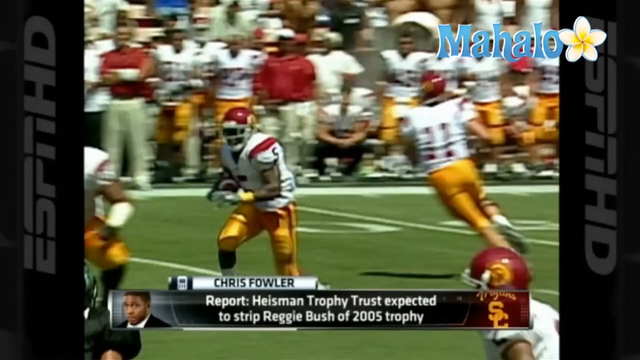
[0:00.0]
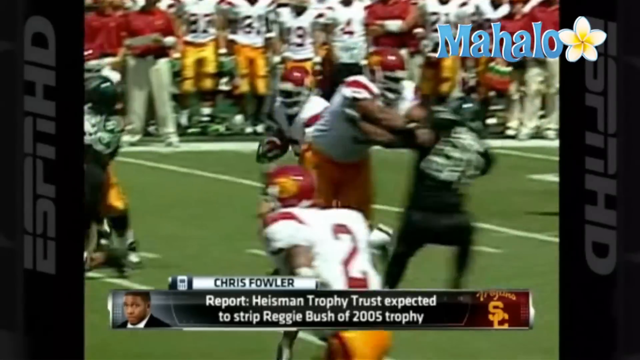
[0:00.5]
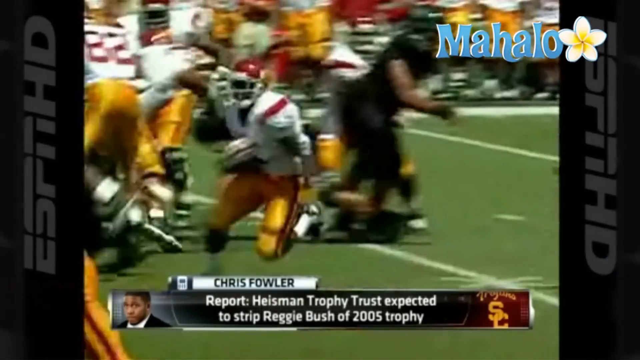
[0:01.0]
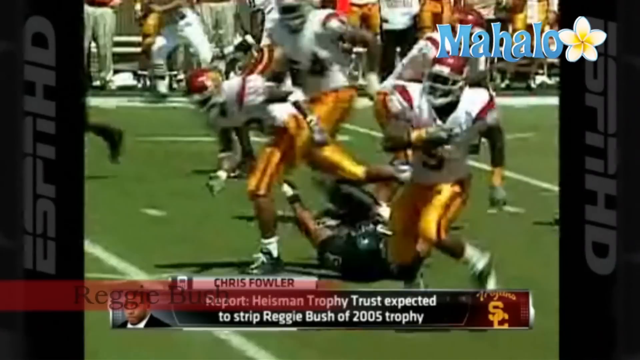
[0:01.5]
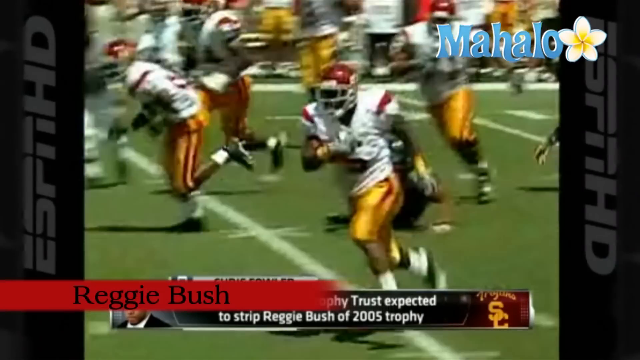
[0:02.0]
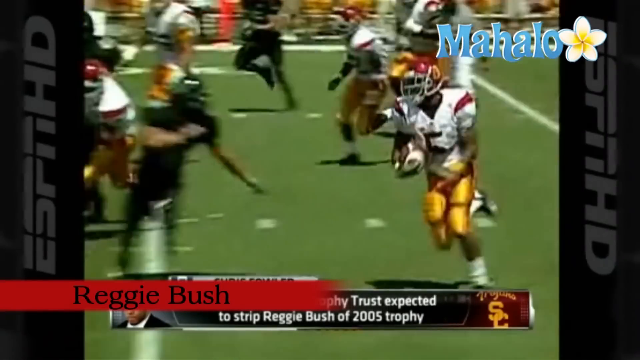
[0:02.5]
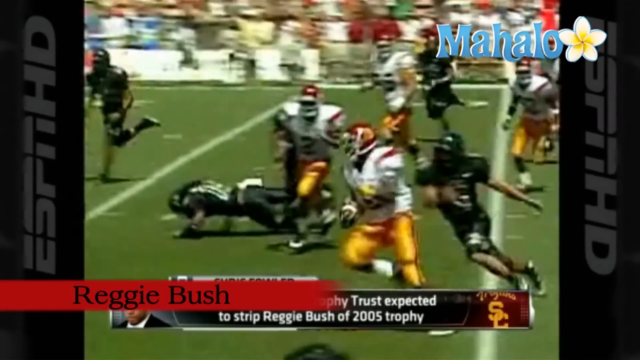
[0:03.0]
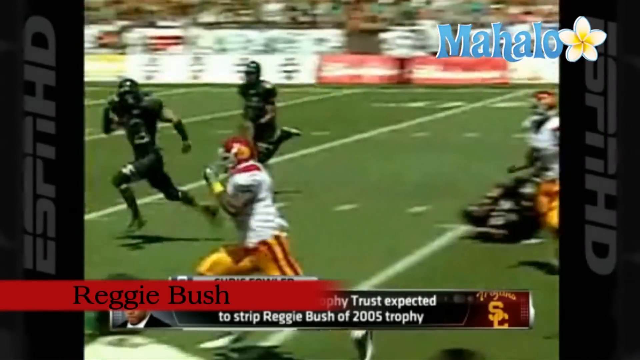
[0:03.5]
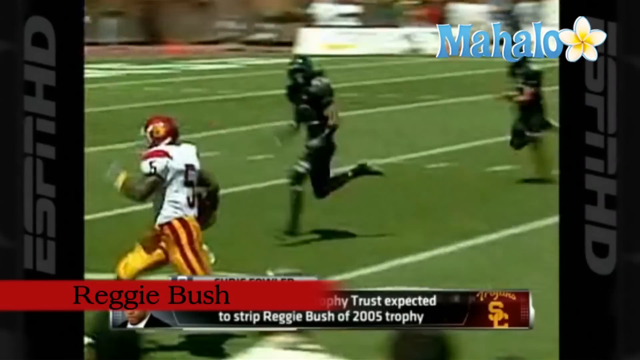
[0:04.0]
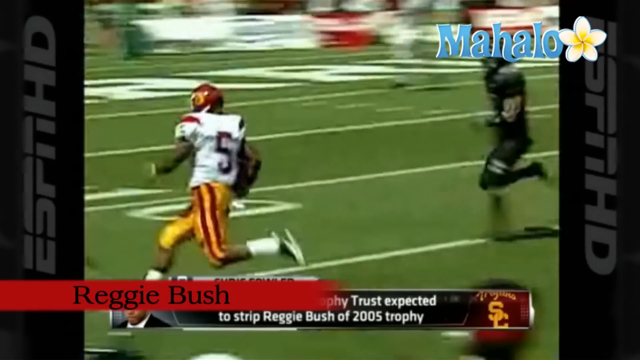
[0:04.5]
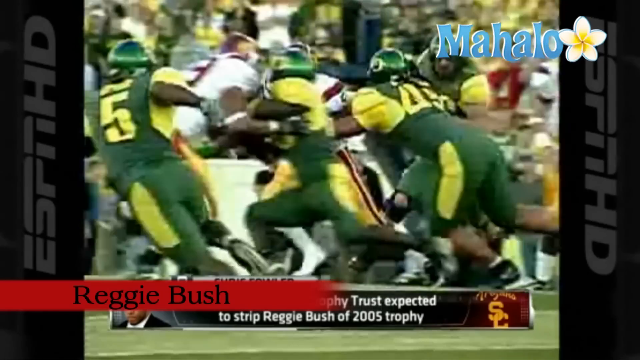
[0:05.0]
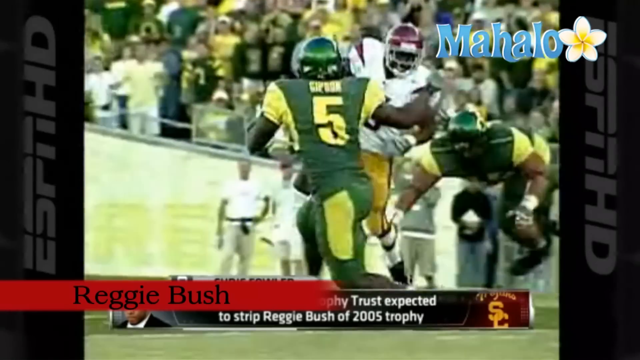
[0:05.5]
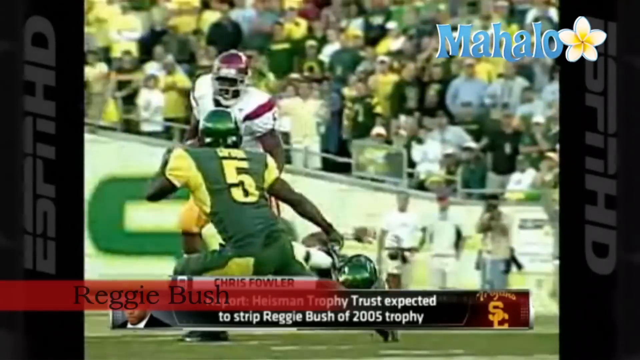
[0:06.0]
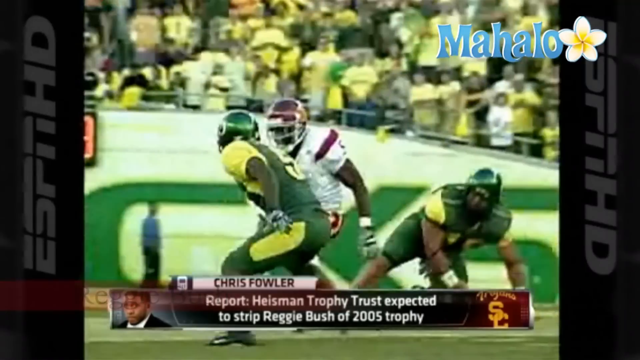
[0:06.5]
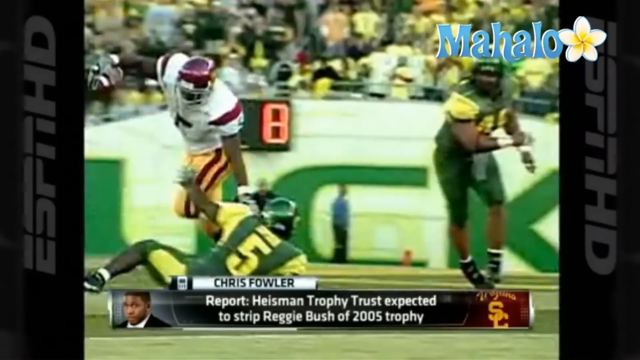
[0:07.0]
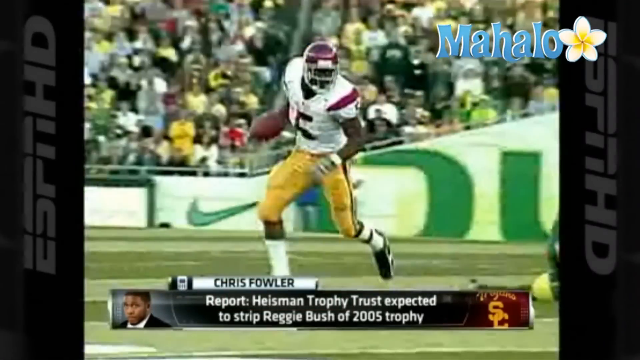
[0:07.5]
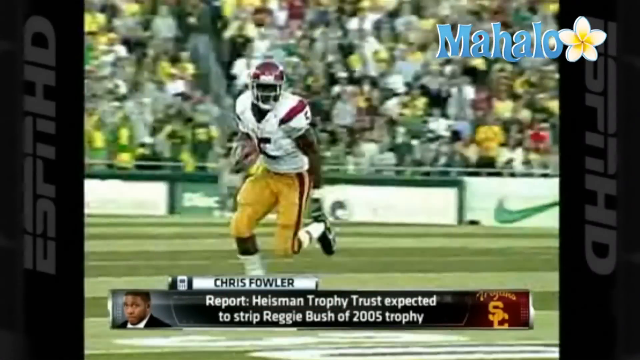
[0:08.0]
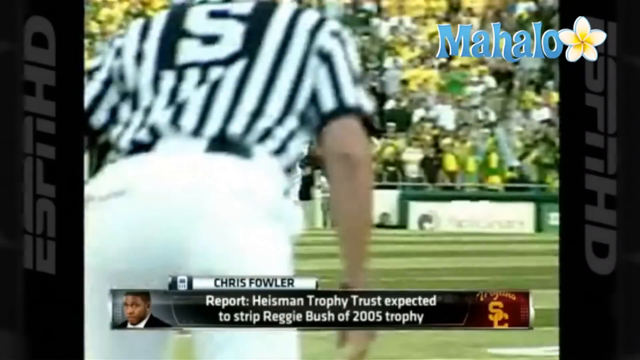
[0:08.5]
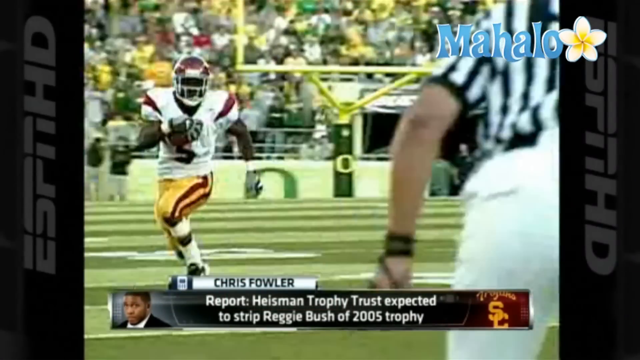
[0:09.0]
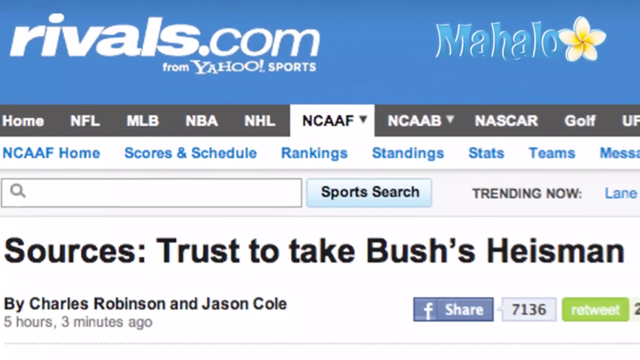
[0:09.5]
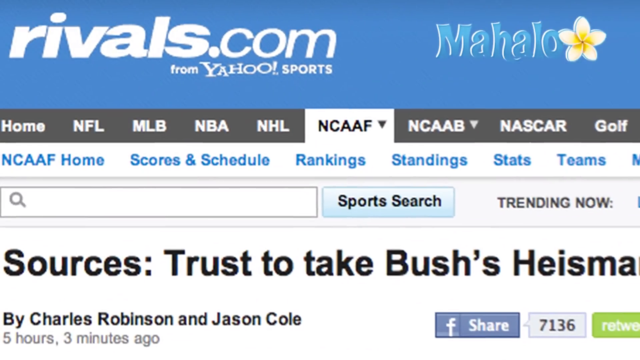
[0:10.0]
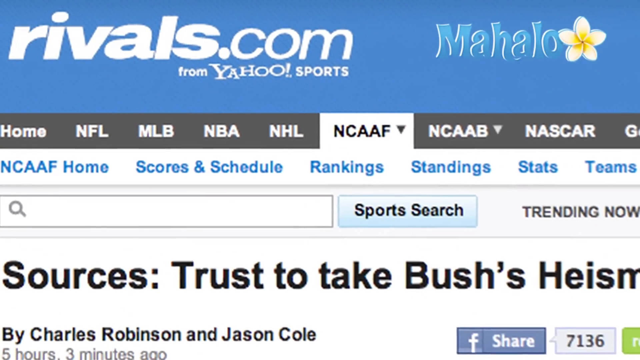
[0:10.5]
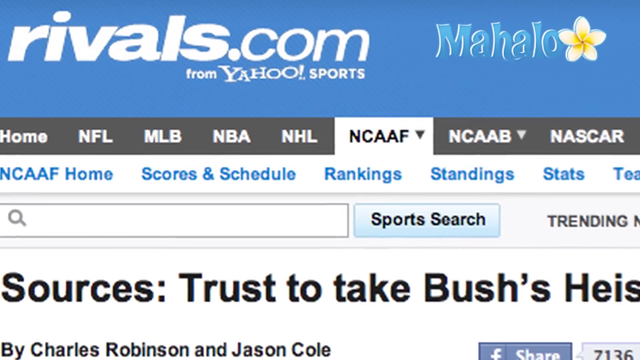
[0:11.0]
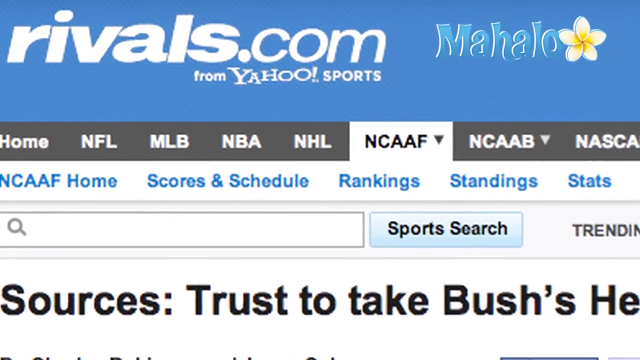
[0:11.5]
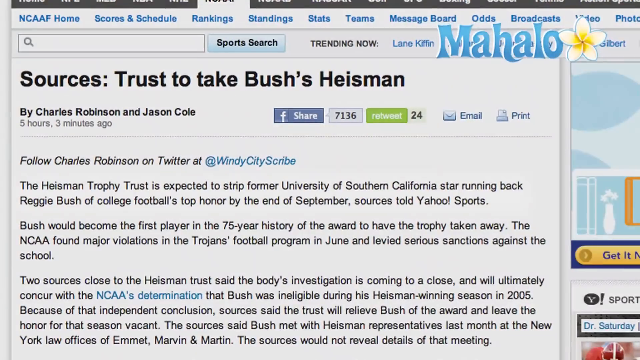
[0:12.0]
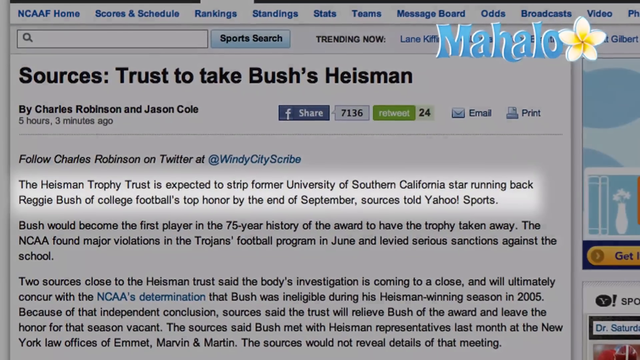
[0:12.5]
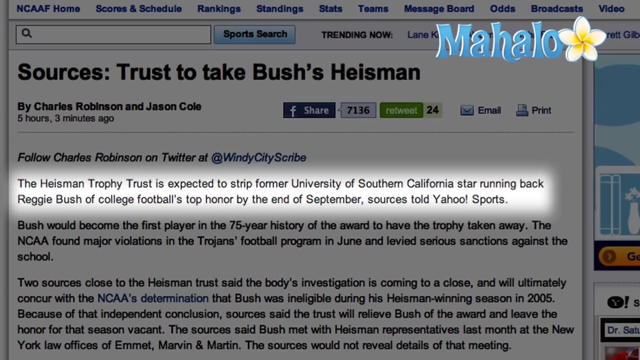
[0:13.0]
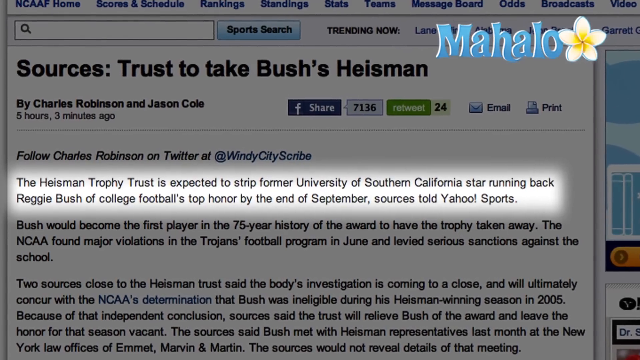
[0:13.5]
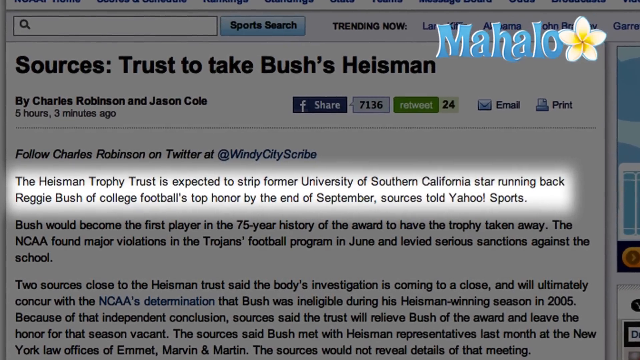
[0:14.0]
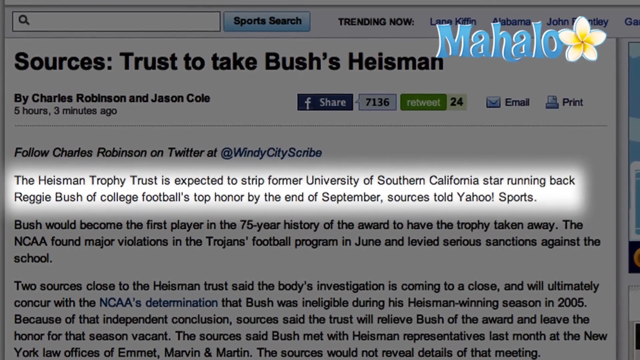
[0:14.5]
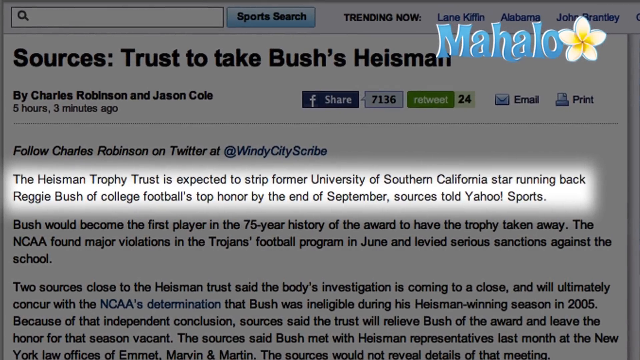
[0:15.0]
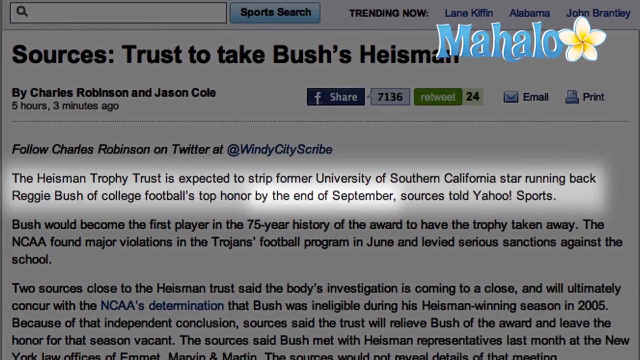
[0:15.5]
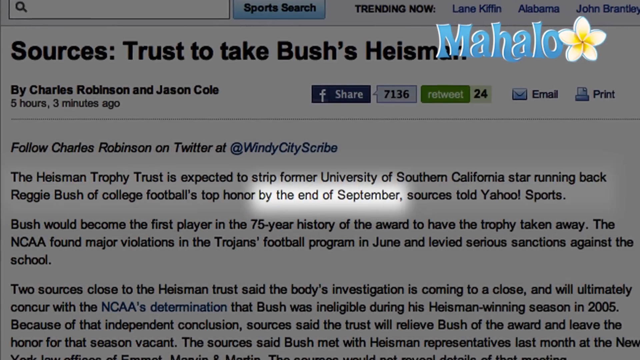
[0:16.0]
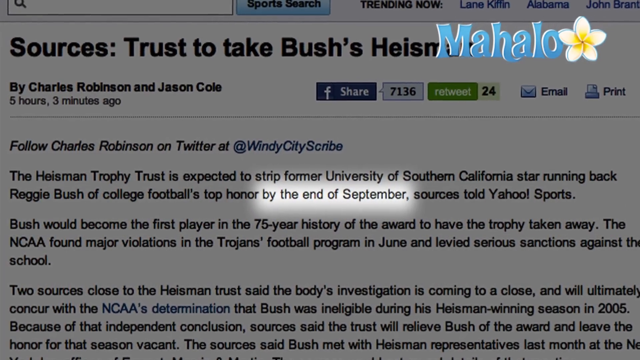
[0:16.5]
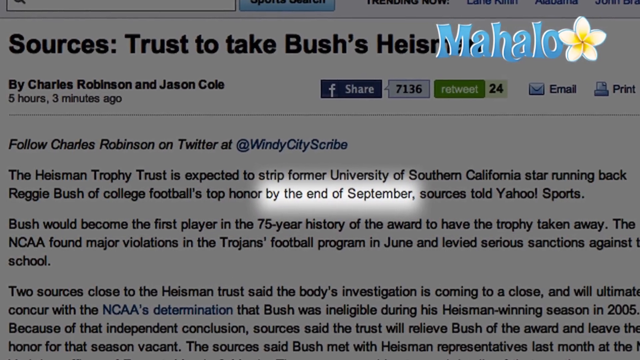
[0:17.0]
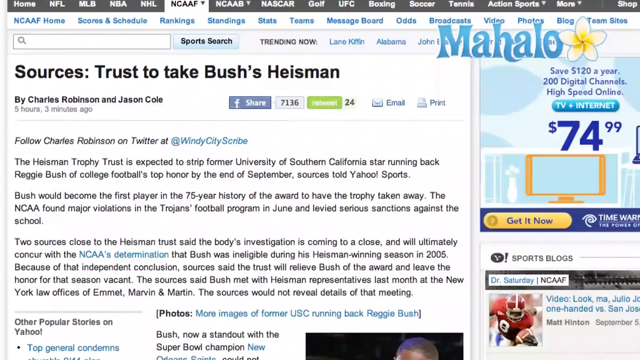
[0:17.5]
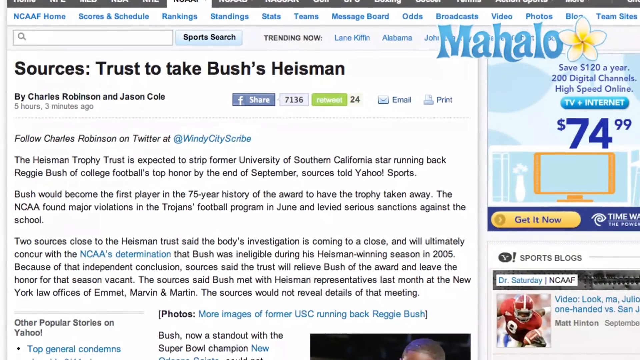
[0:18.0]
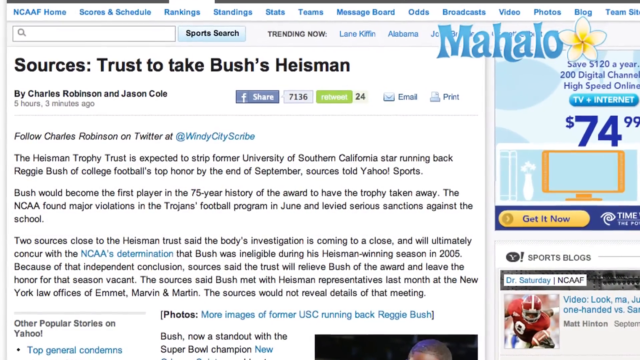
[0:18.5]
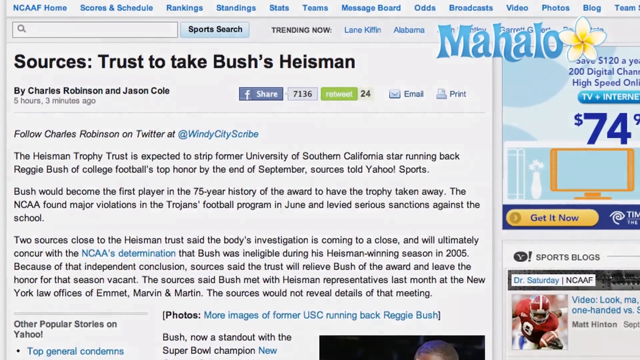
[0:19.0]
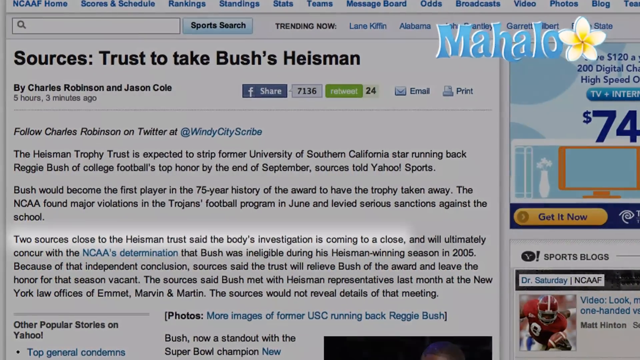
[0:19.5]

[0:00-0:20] A college football highlight appears on ESPN HD. Along the side of the screen are black vertical strips with "ESPN HD" written in gray text. At the bottom of the screen is a red rectangle with "Reggie Bush" in black text in the middle, and the footage appears to be different clips of him running the football during his college career. In the top right corner, "Mahalo" is in blue writing with a white flower next to it. The video then transitions to an internet article whose heading says "Sources: Trust to take Bush's Heisman," with an article below. The view zooms in on the article, and a passage is highlighted in white as the rest of the background turns dark; it reads "the Heisman Trophy Trust is expected to strip former University of Southern California State star running back, Reggie Bush, of college football's top honor by the end of September. Sources told Yahoo Sports." The phrase "by the end of September" is then highlighted as the view zooms in.